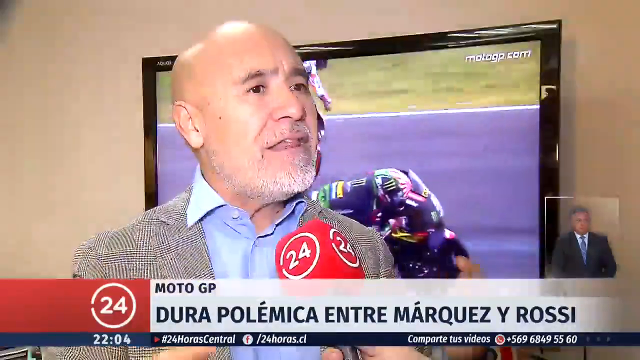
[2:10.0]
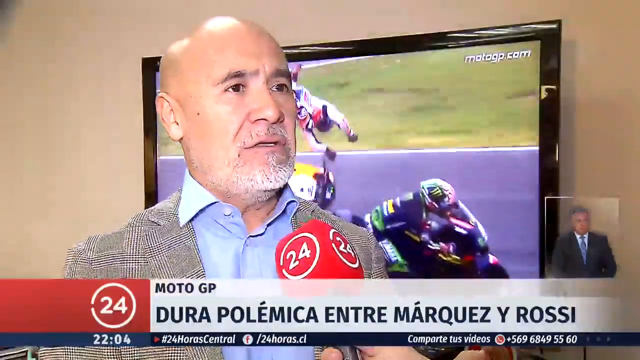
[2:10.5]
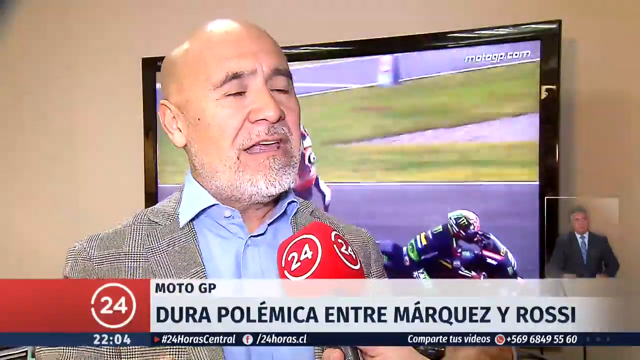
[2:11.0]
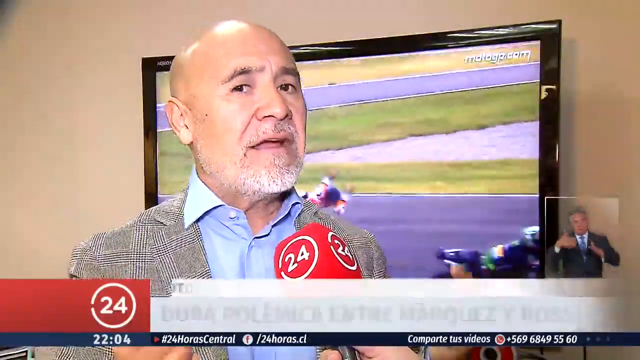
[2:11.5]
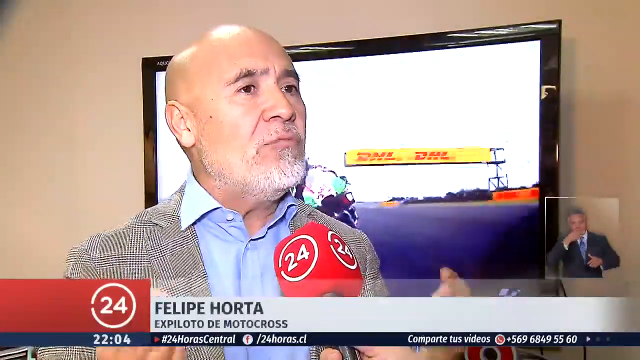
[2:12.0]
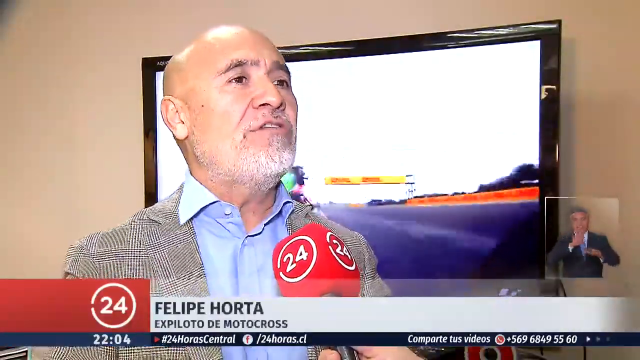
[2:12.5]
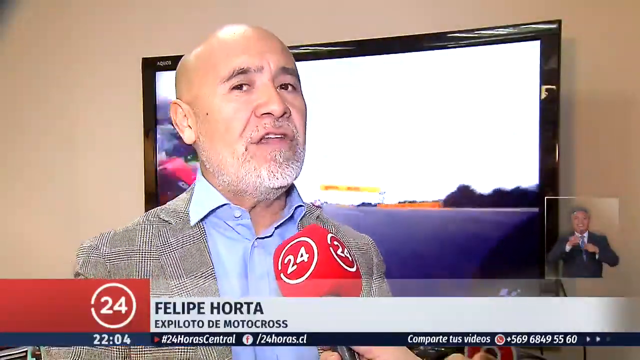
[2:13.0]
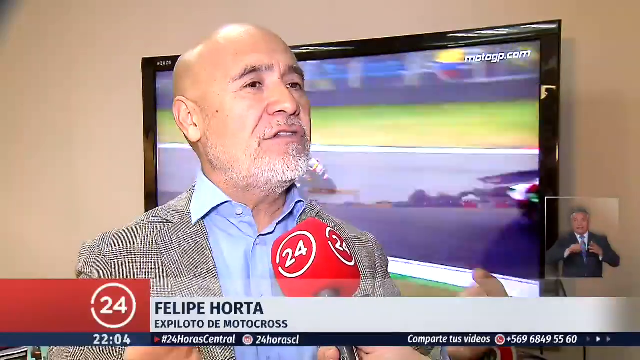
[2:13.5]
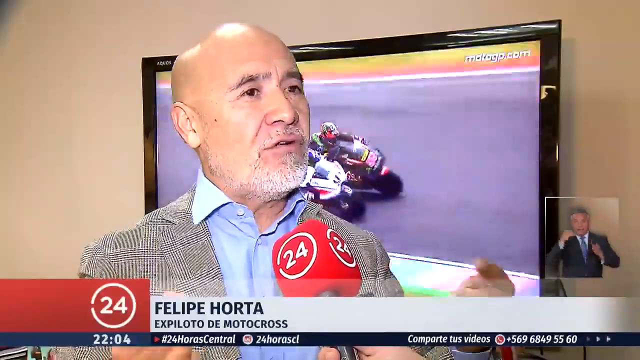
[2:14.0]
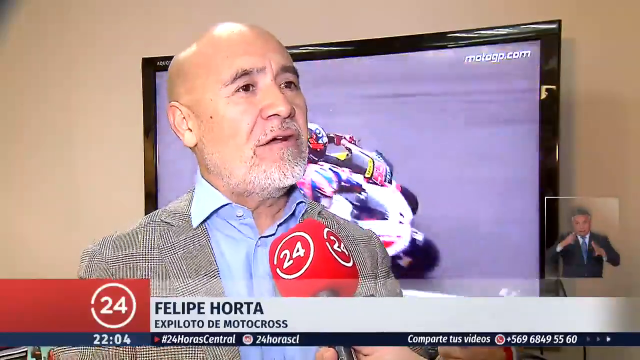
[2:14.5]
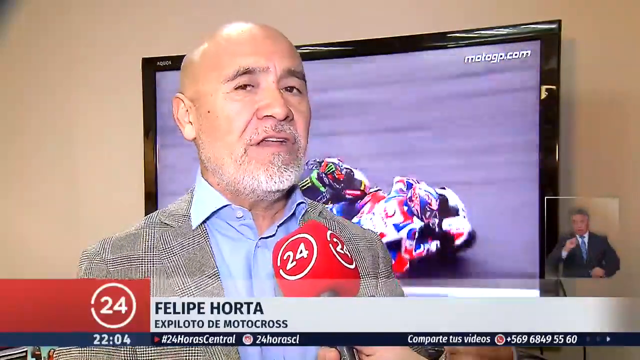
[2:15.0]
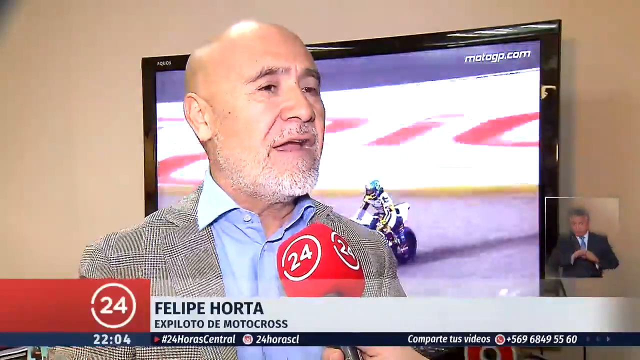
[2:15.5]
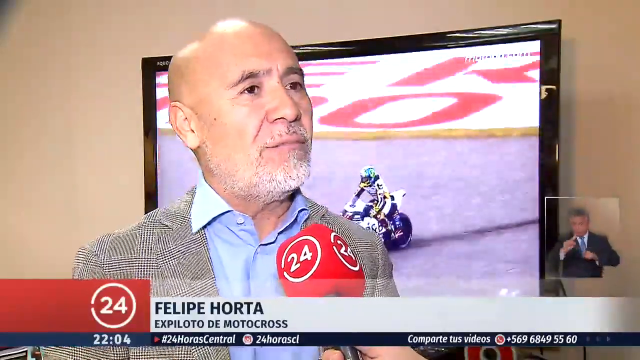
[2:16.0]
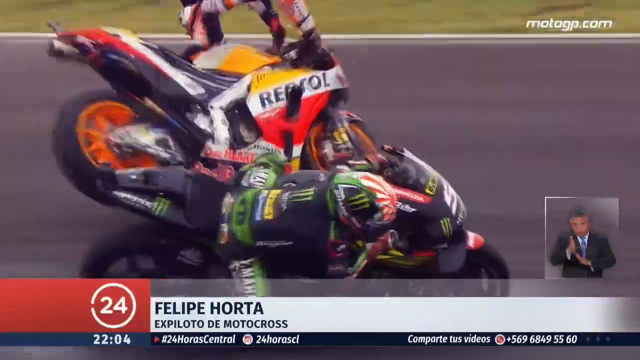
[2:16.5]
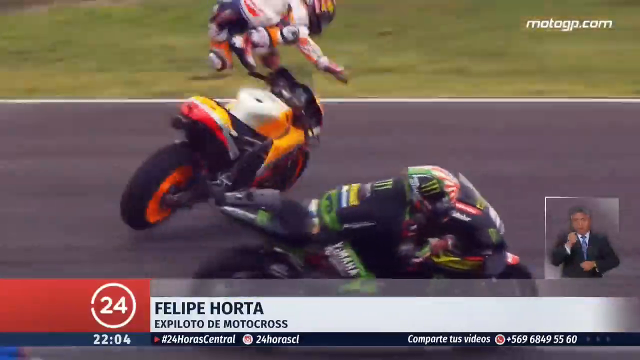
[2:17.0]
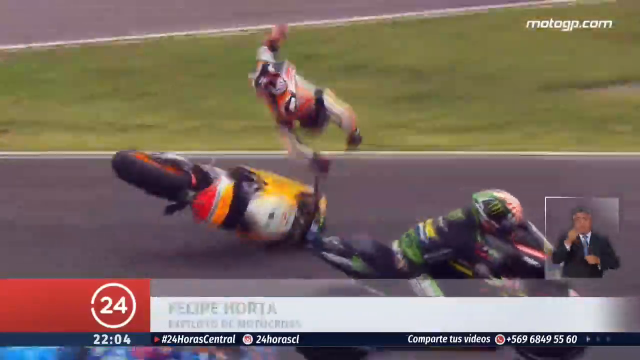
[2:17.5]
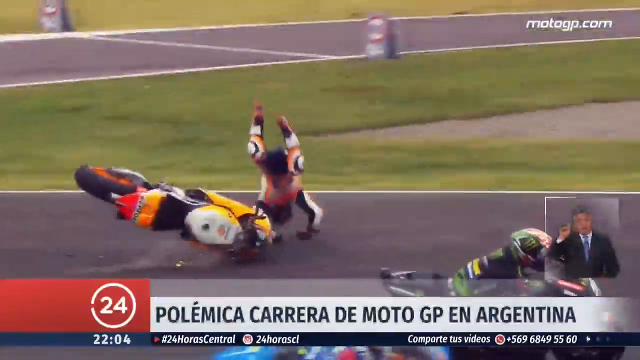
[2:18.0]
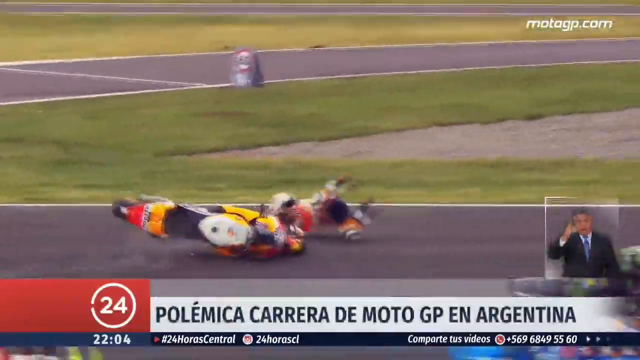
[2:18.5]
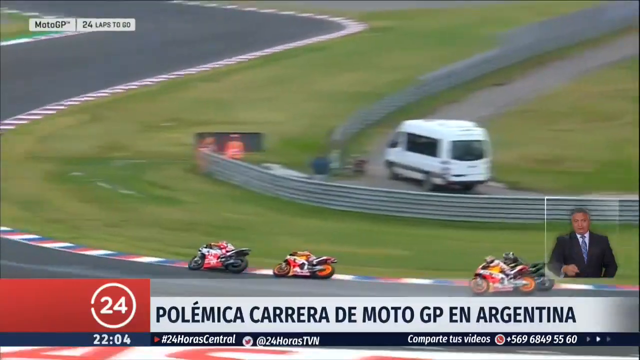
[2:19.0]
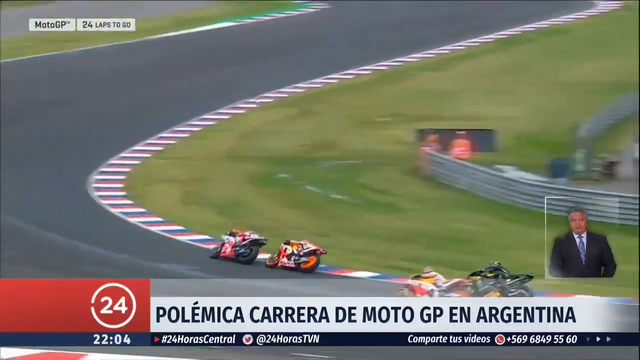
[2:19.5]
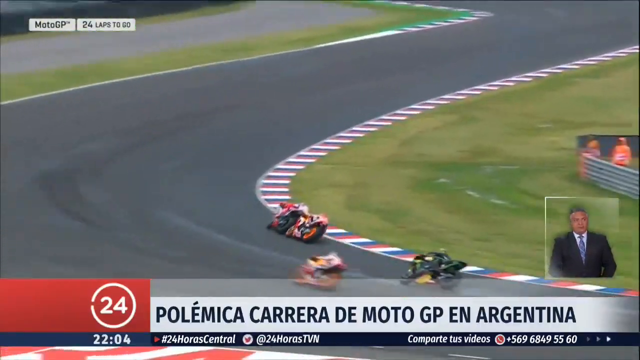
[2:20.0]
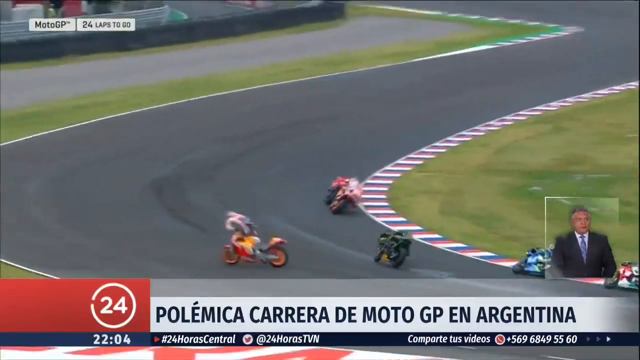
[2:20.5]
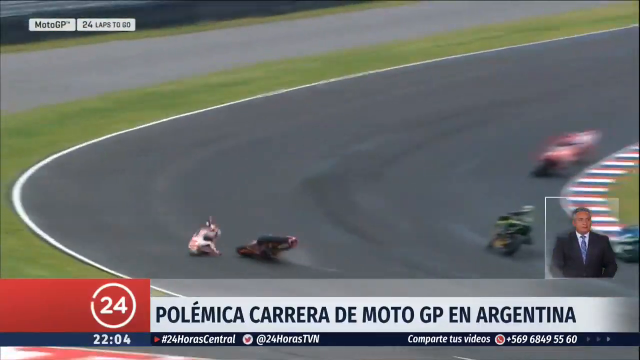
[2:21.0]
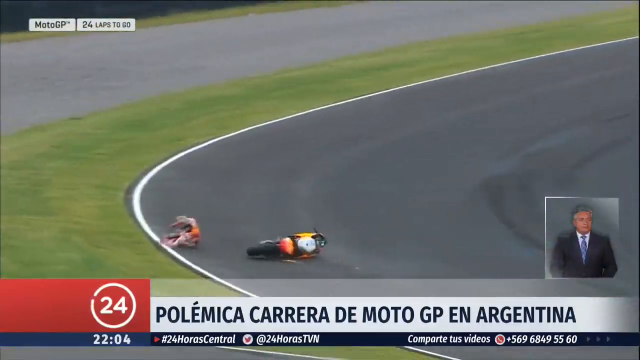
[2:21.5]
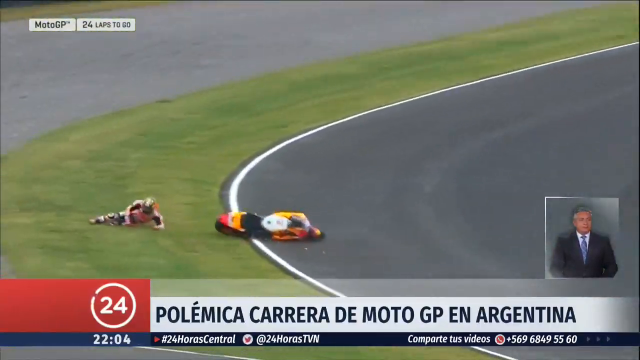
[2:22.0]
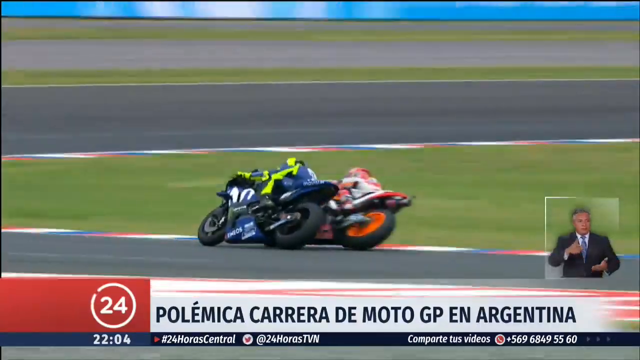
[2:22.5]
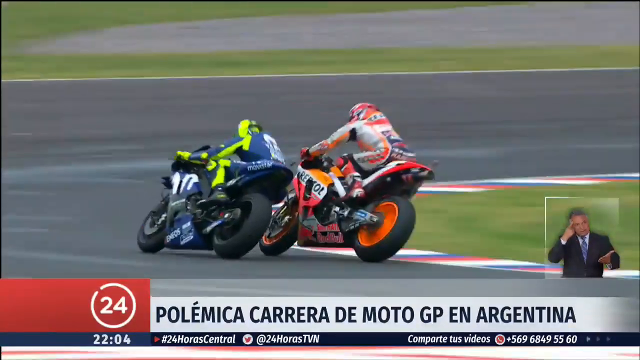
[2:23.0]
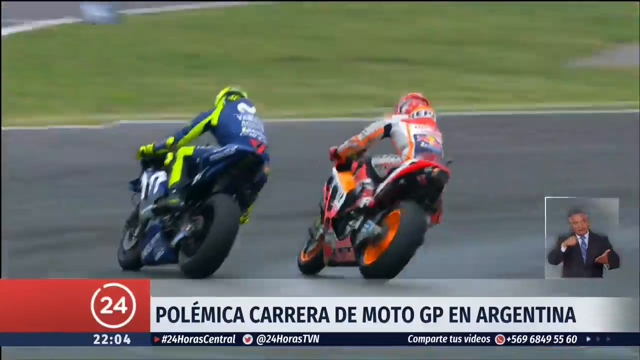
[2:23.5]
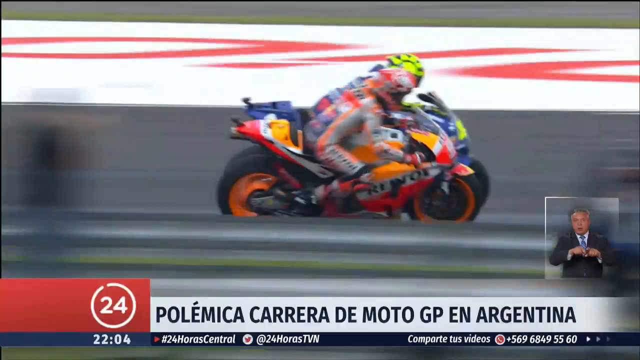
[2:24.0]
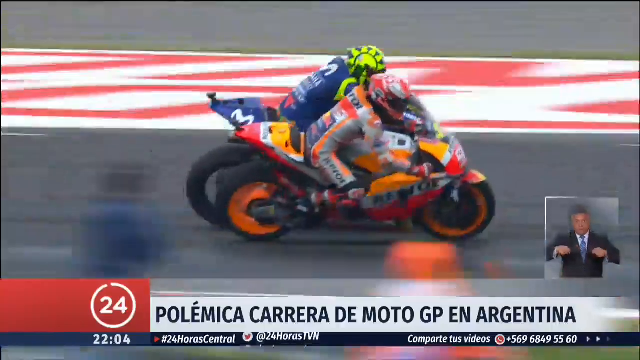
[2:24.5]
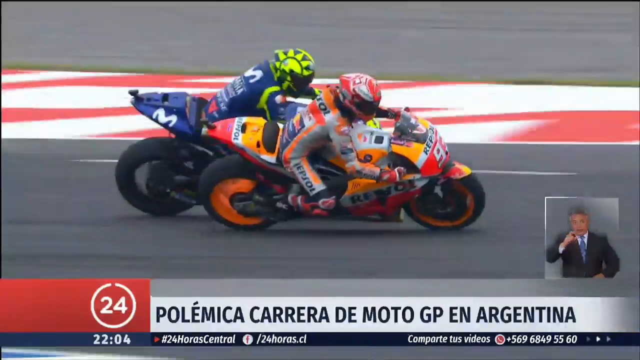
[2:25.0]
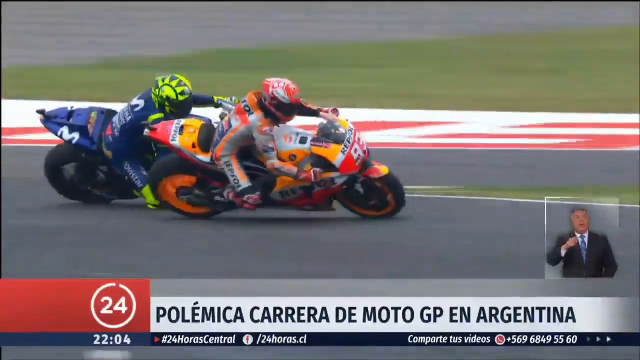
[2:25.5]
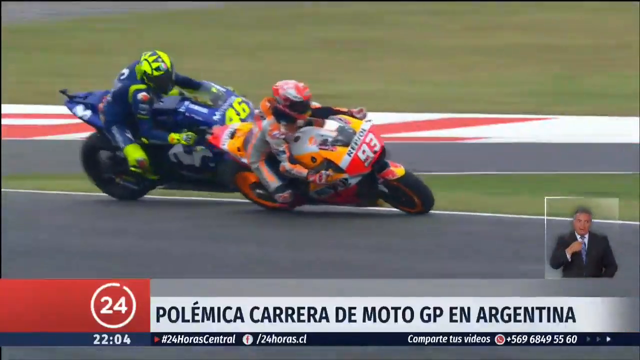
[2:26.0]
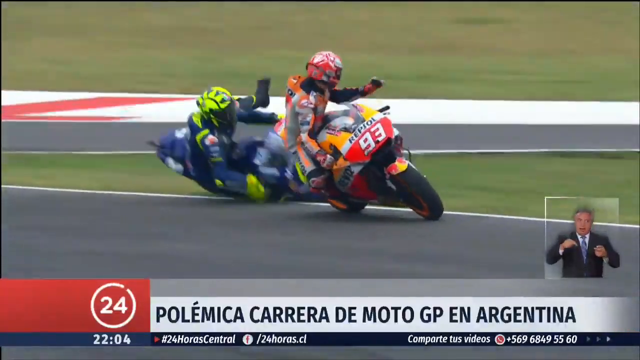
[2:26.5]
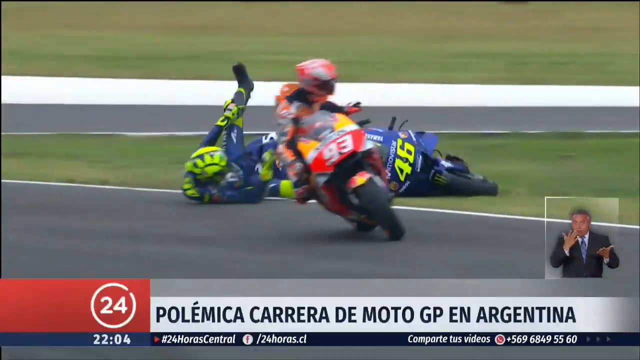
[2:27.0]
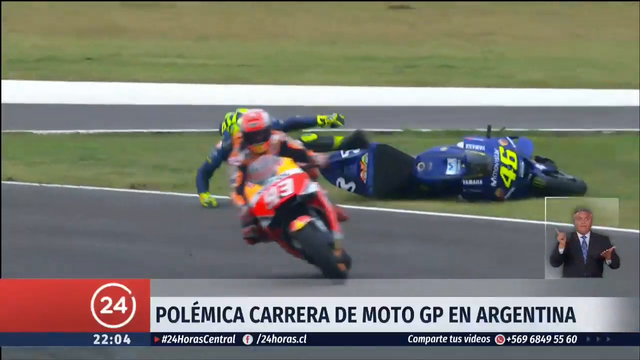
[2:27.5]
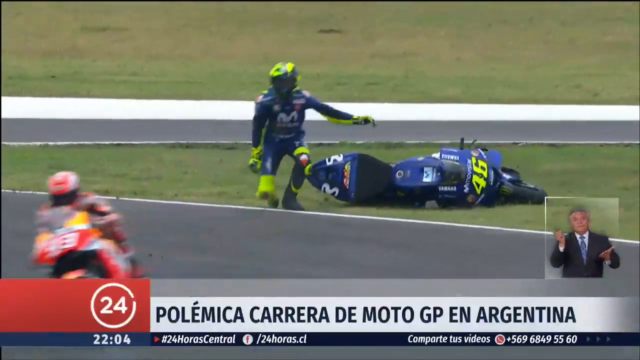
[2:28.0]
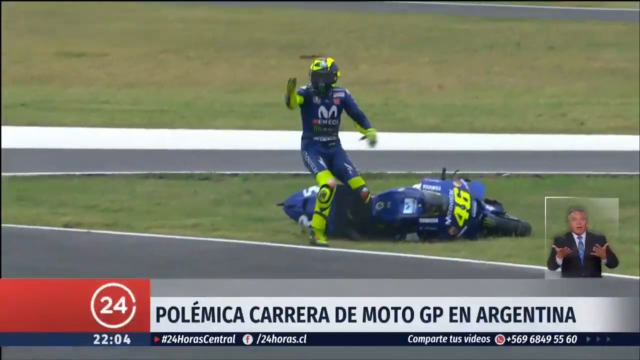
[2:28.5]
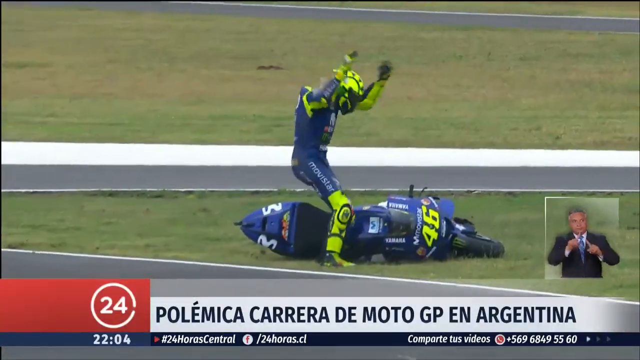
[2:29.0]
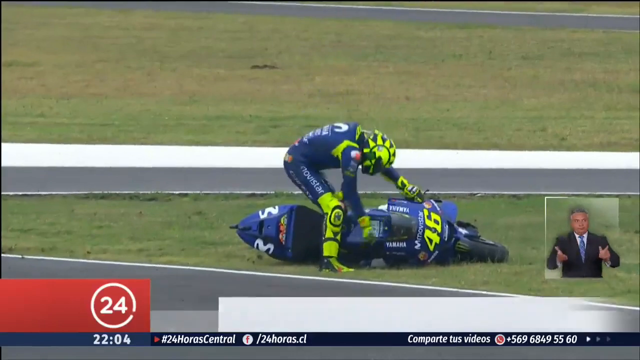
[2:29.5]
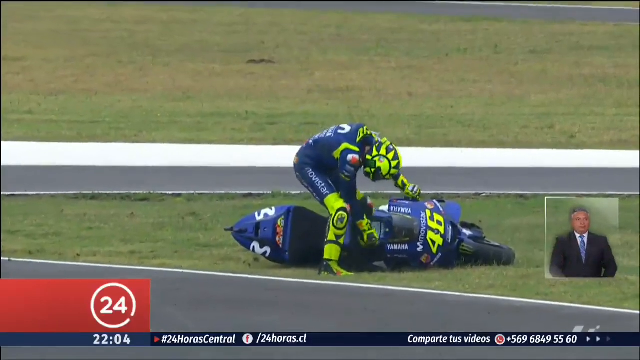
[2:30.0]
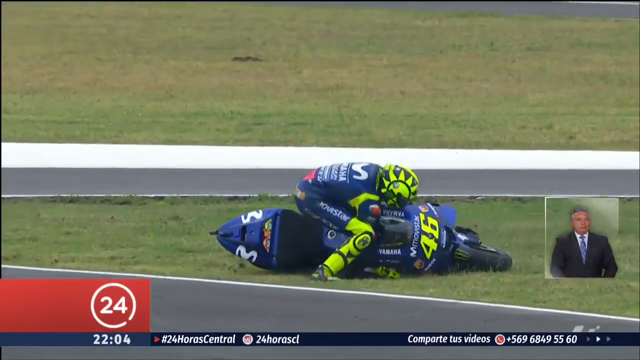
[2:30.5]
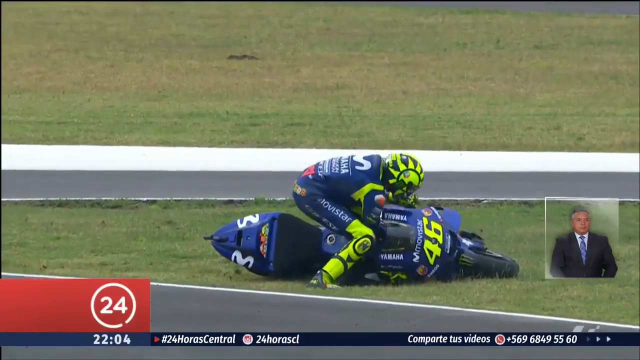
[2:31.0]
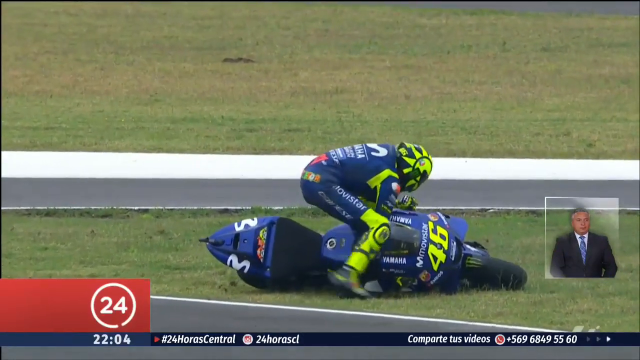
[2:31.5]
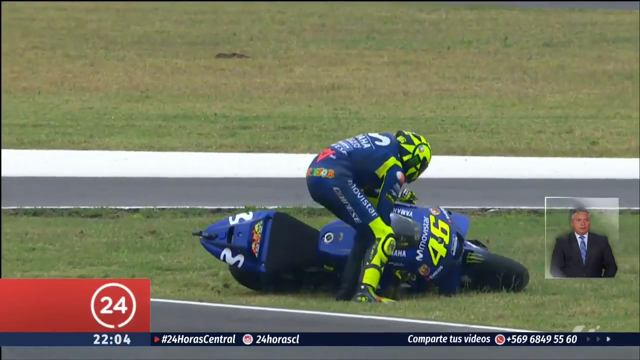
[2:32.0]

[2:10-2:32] A man is being interviewed in a gray kind of suit jacket and a blue shirt, with 24 on the red microphone, MotoGP, and an interpreter on the right side of the screen. He is in front of a monitor that shows one of the riders flying off his bike. Other footage shows grayish skies during the race and other racers going around the track. Another rider flies off a yellow and black motorcycle. Racers go by, and there is a van on the field in a barrier fenced-in area. Some footage shows celebrations with winners and losers, while the interpreter is still interpreting. There are close calls, with some riders nearly falling off, and one rider falls off his bike: a person in a blue and neon green outfit on a blue bike.